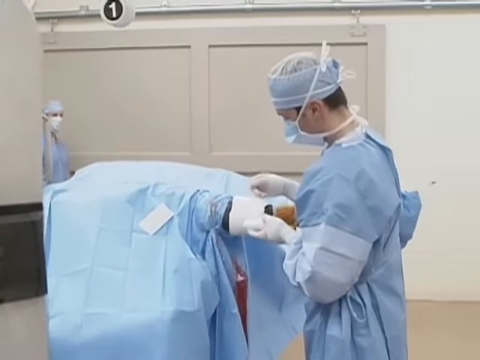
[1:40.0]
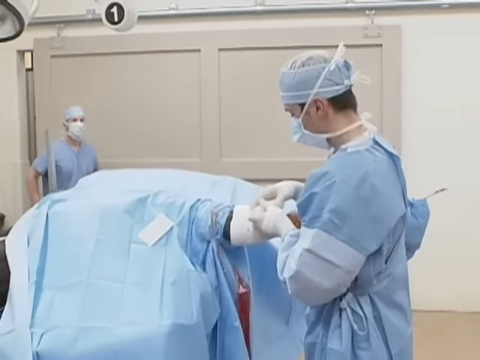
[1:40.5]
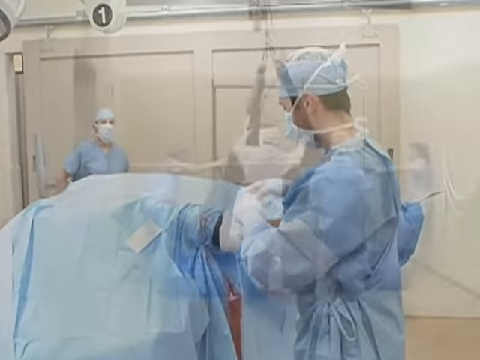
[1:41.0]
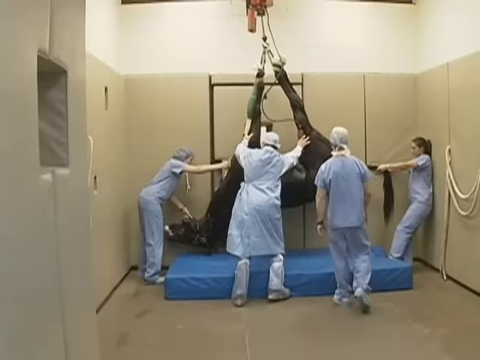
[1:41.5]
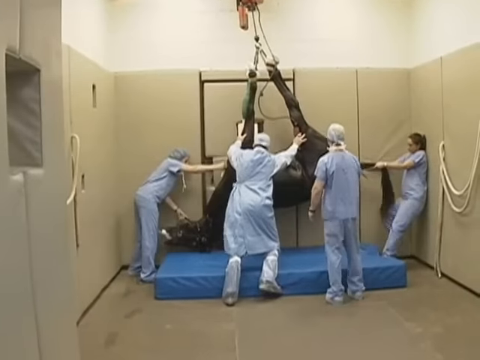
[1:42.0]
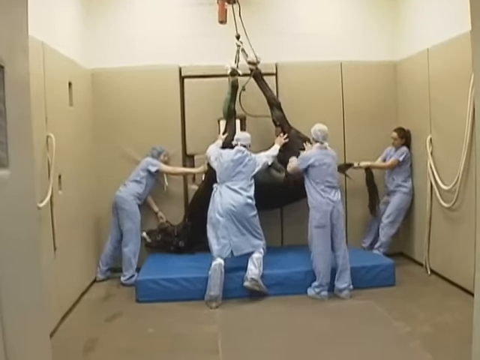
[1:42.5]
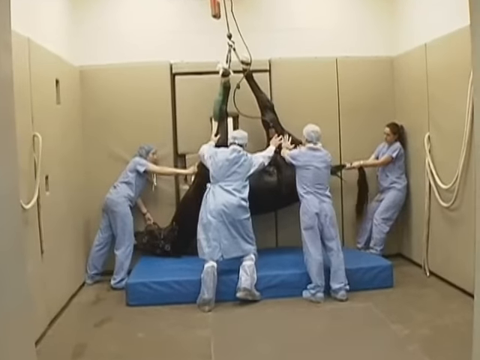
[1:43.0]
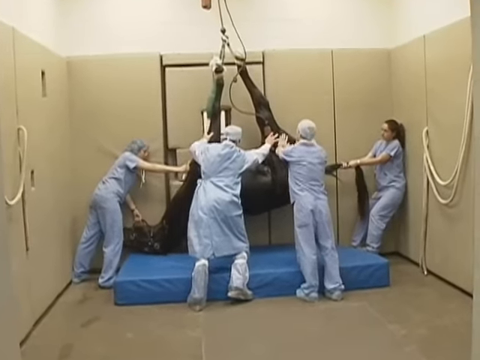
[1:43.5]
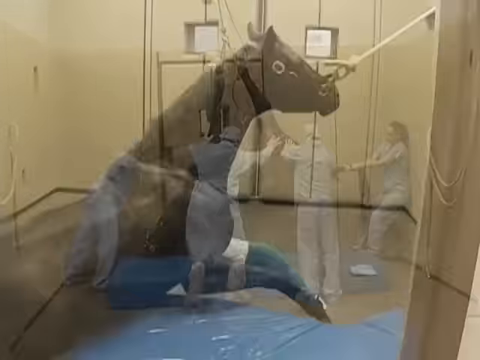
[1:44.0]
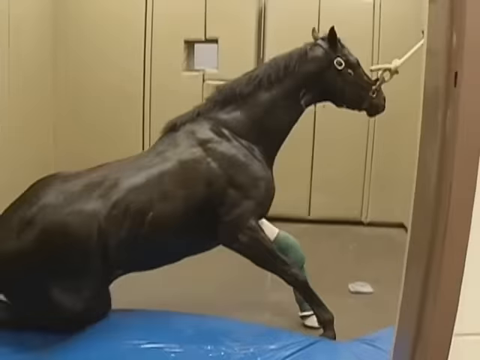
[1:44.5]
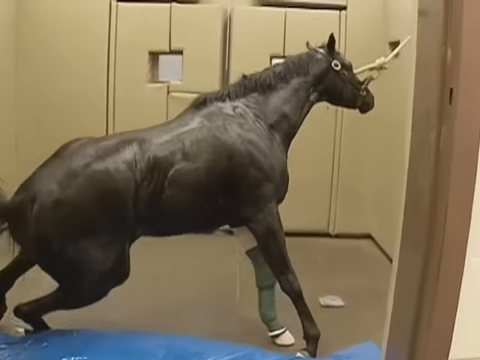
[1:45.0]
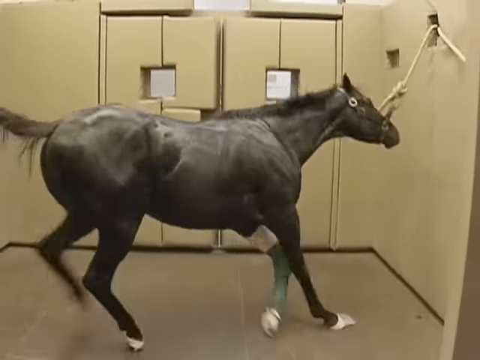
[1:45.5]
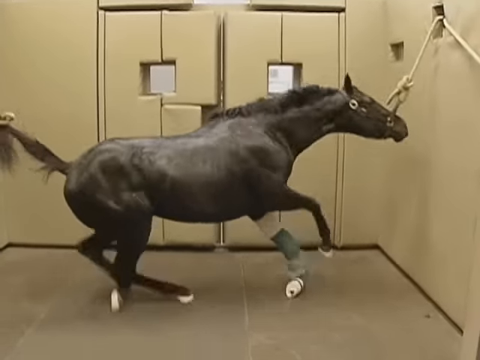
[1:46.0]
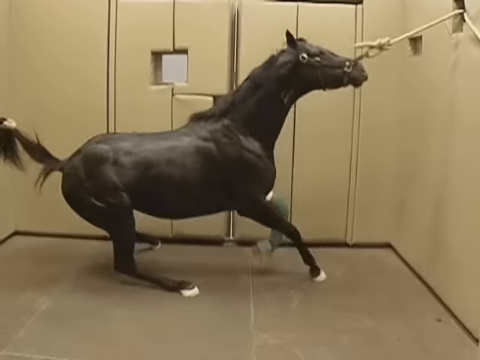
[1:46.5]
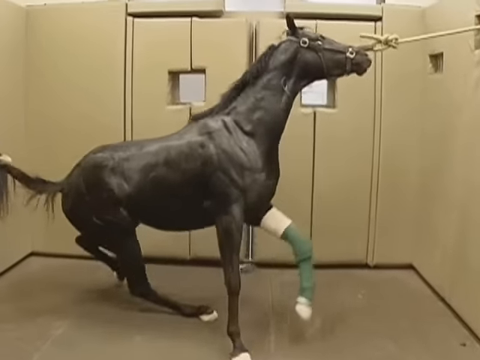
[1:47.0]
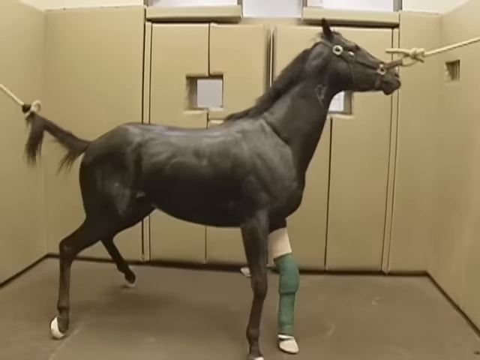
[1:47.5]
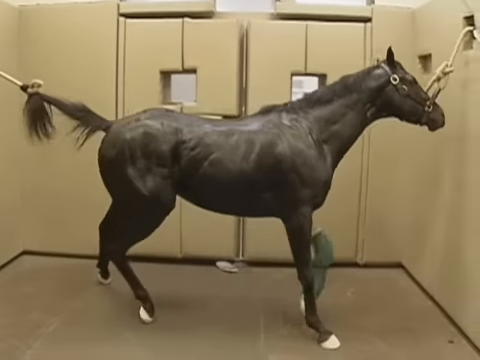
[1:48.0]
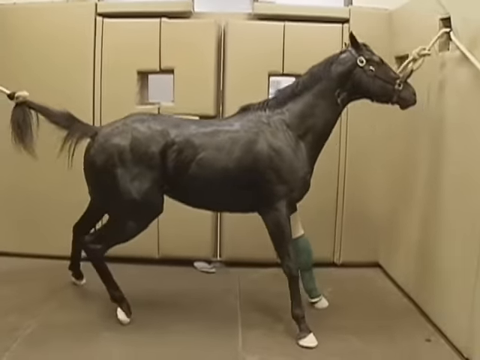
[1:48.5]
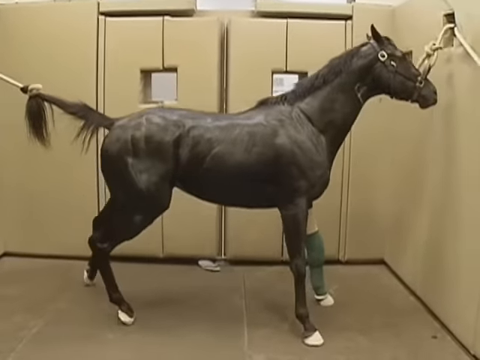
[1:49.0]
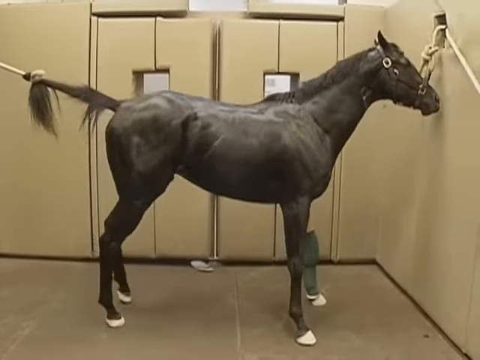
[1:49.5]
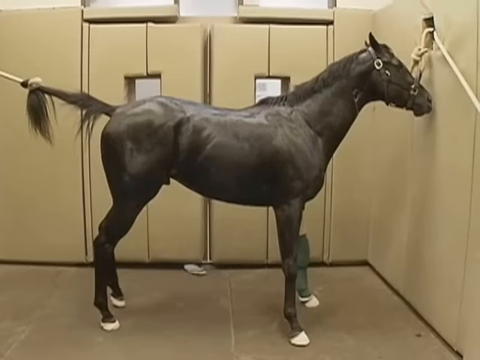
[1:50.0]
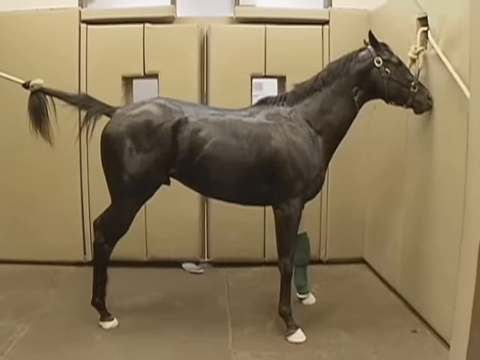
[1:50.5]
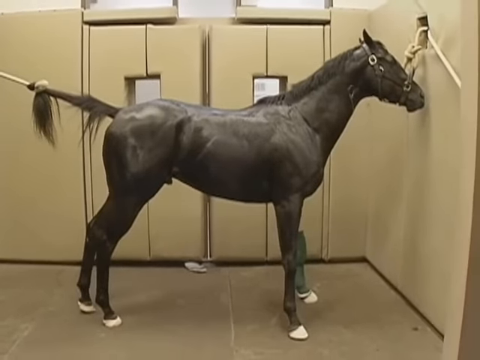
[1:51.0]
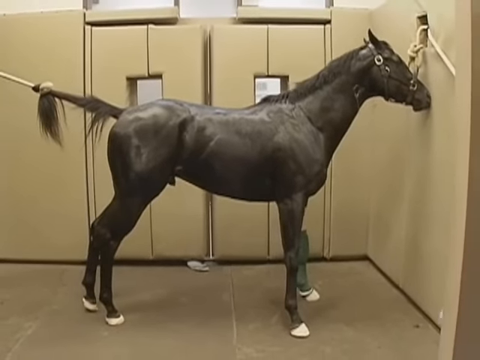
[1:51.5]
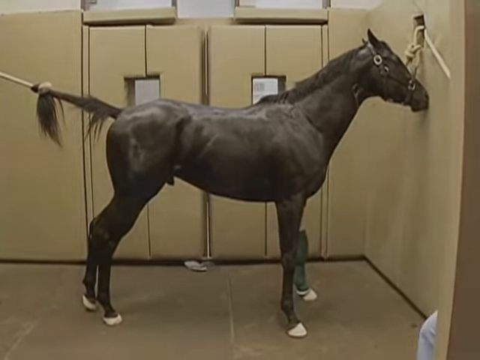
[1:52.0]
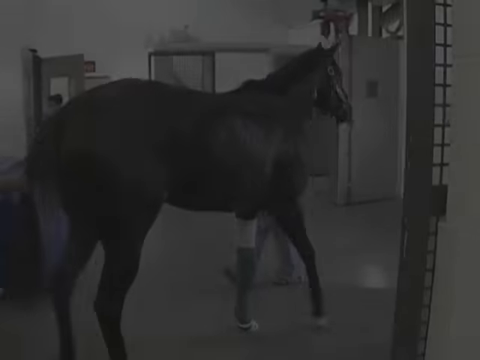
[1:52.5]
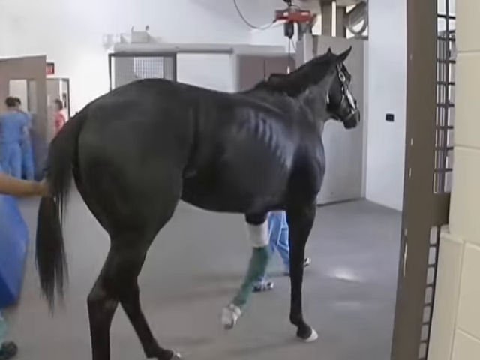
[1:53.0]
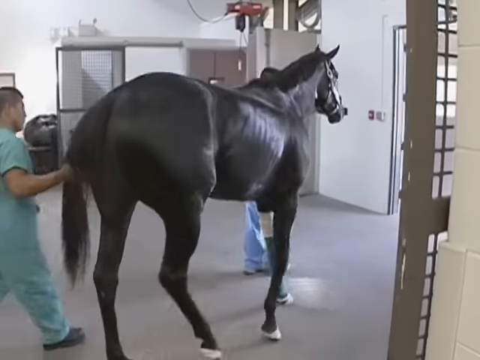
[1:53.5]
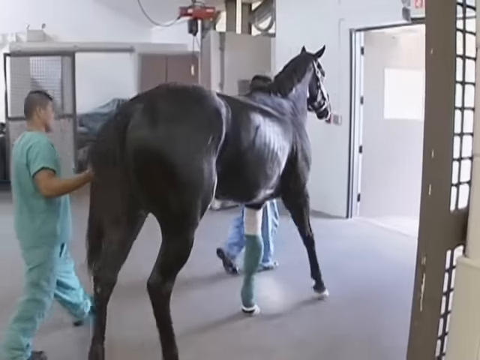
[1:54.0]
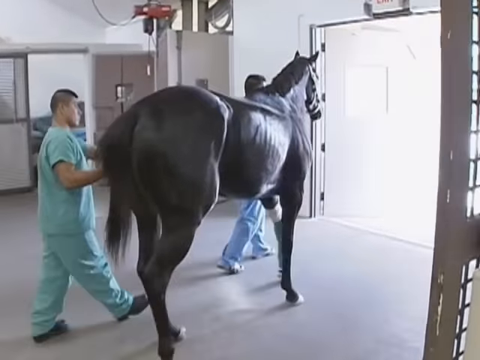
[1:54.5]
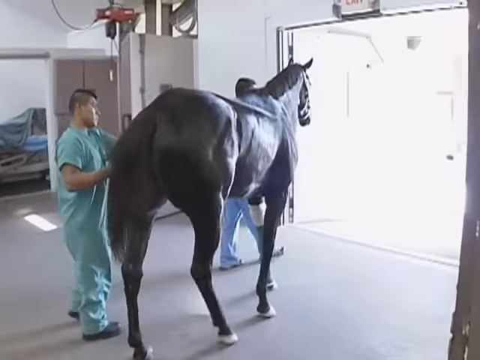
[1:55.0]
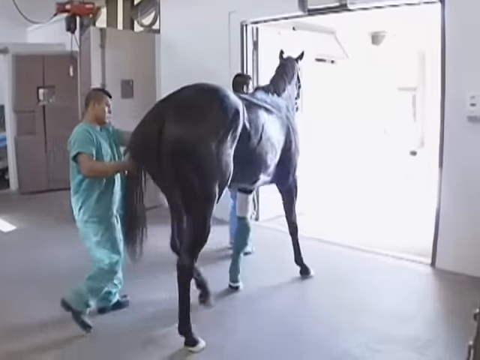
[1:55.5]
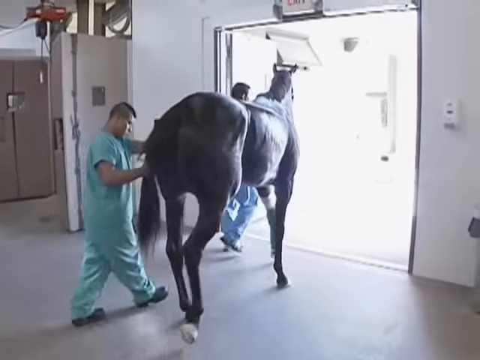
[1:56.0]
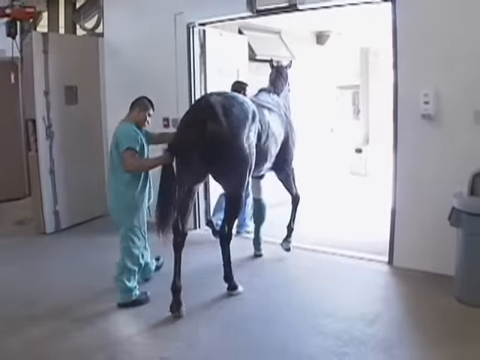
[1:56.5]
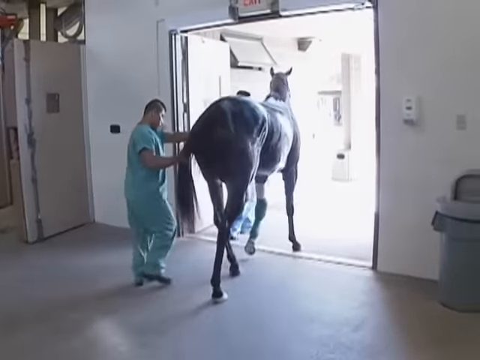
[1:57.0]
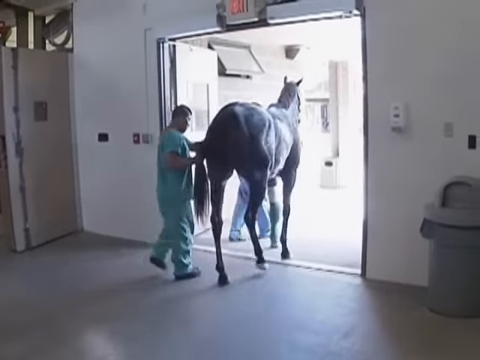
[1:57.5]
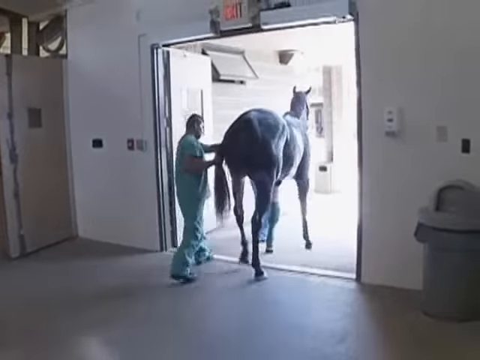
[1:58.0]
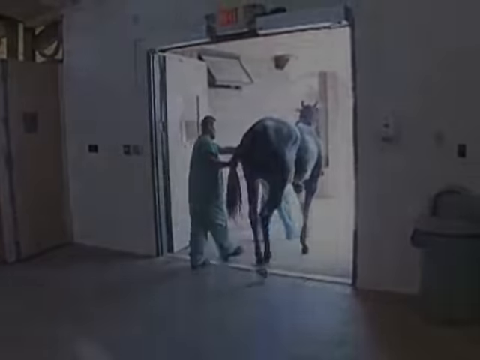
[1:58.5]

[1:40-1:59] What appears to be the beginning, or possibly the end, of the surgical procedure on the horse takes place in what looks to be an operating room. Most of the horse is covered with a blue blanket or covering, and someone in a surgical gown bandages the horse's leg. The team then uses the same pulley or track mechanism that had the horse suspended upside down to return it to a different room and lay it down on blue padding. The horse begins to stand upright and appears to be kind of held in place, with ropes tied around its snout and its tail. Finally it is led out, walking on its own, through the exit door.